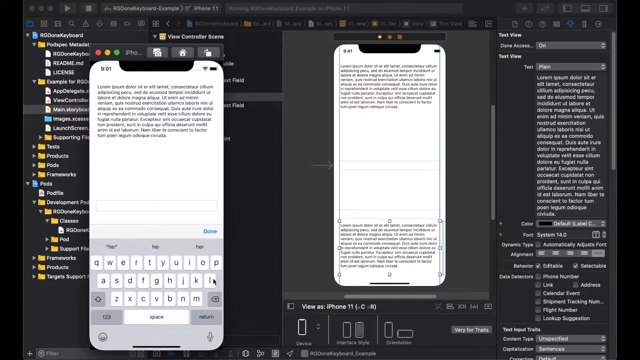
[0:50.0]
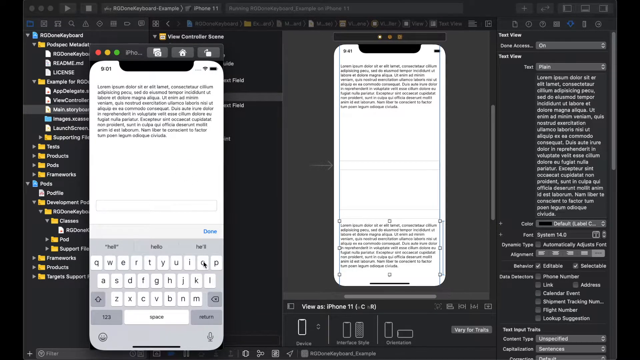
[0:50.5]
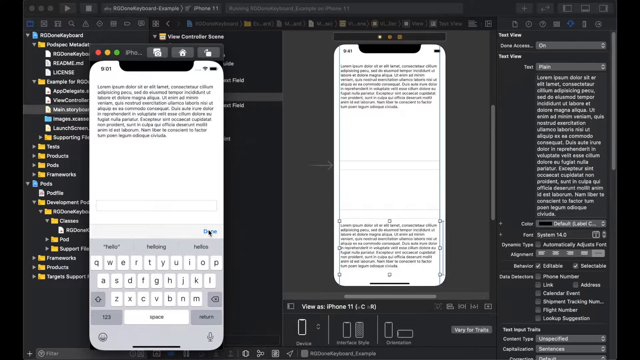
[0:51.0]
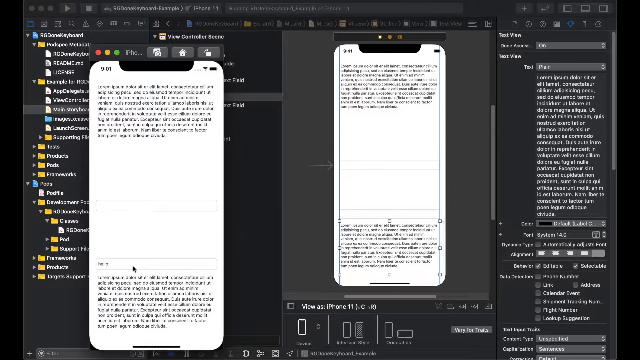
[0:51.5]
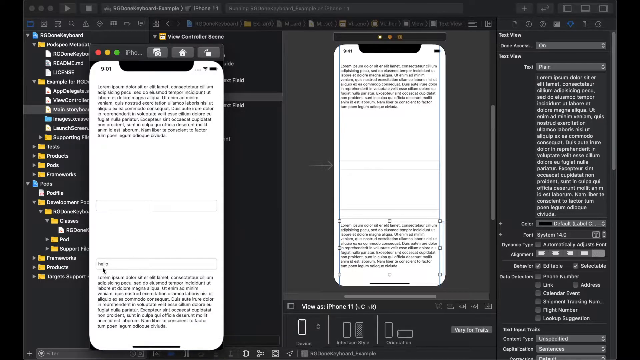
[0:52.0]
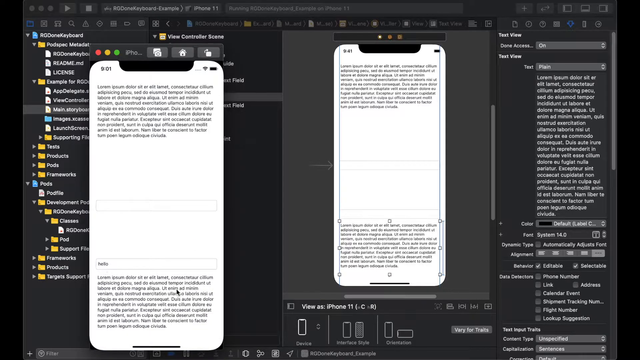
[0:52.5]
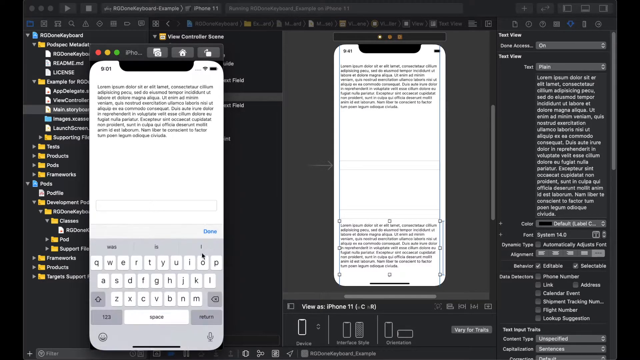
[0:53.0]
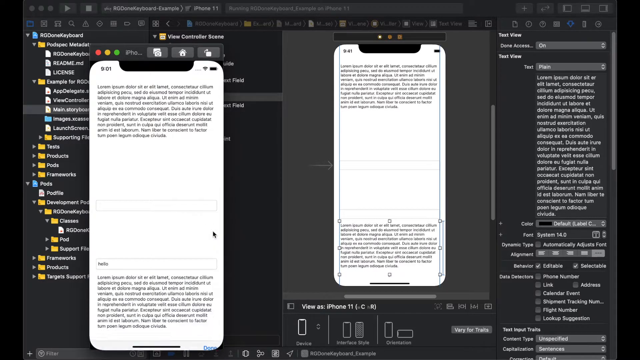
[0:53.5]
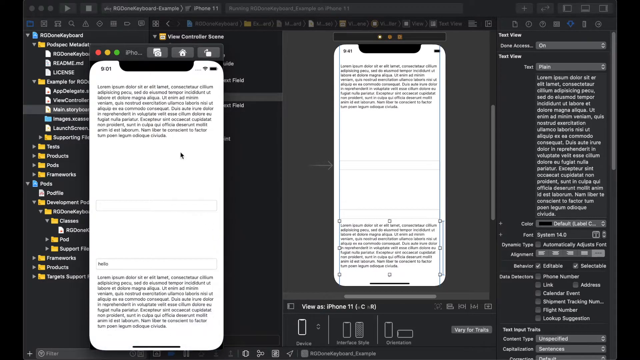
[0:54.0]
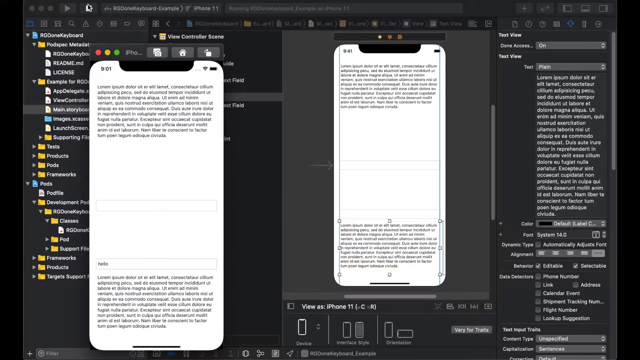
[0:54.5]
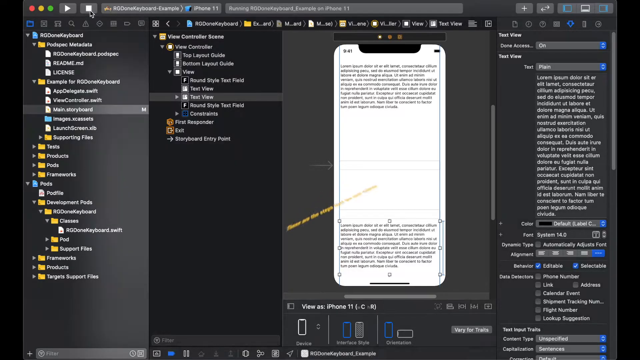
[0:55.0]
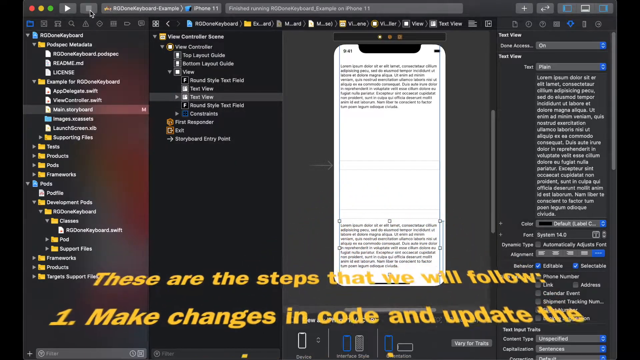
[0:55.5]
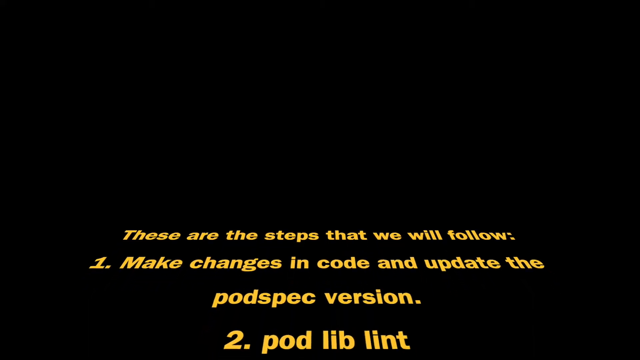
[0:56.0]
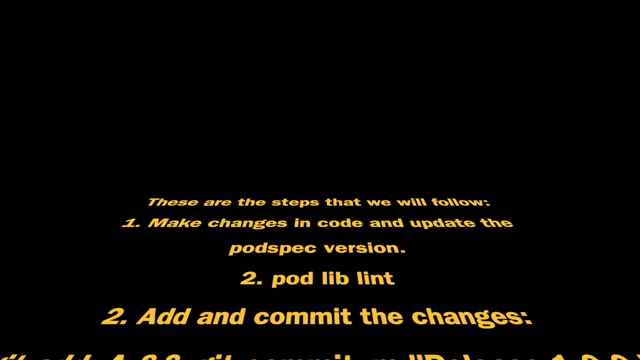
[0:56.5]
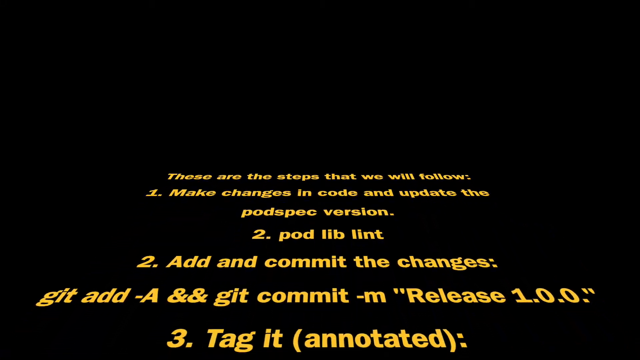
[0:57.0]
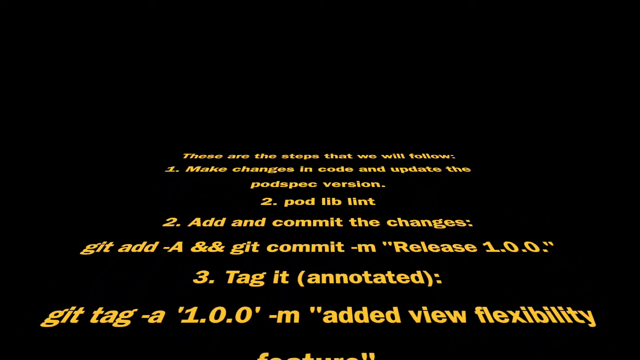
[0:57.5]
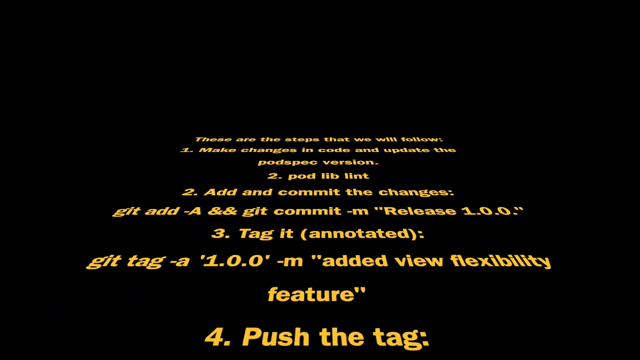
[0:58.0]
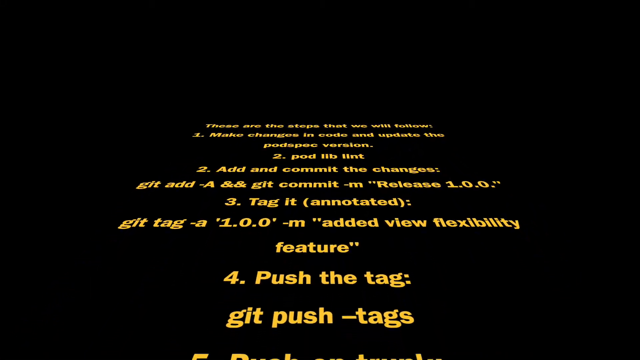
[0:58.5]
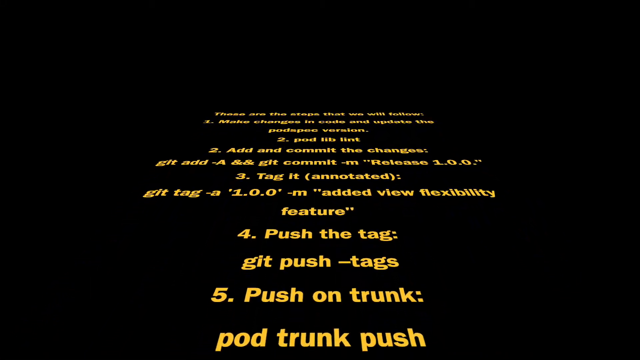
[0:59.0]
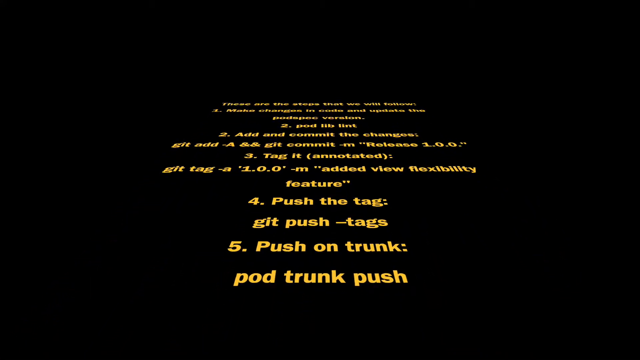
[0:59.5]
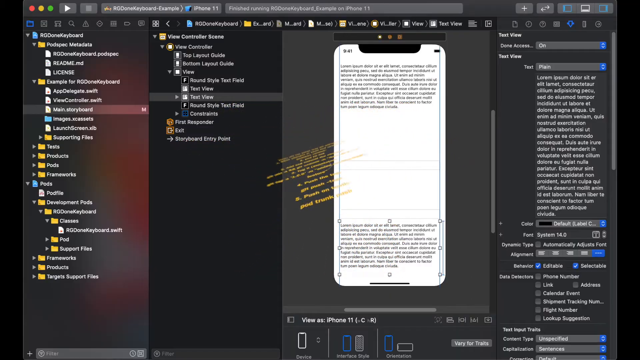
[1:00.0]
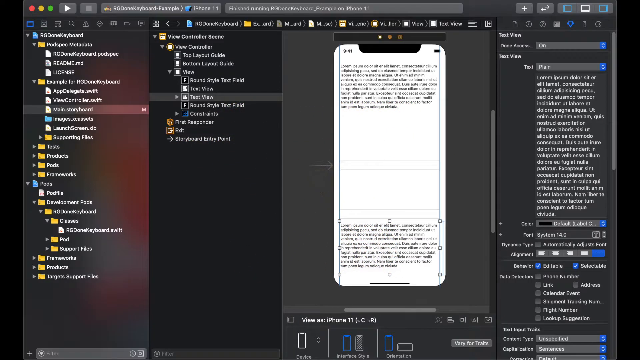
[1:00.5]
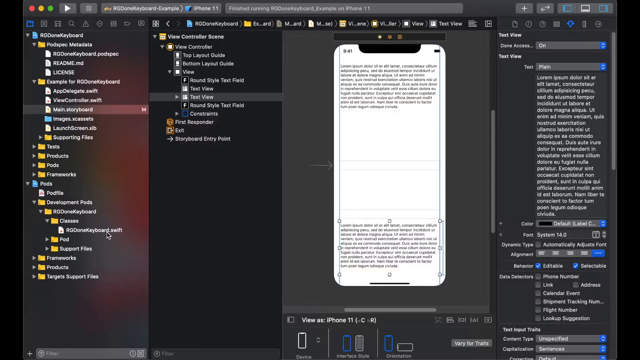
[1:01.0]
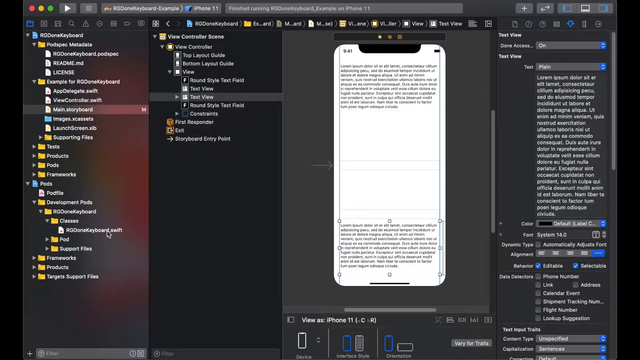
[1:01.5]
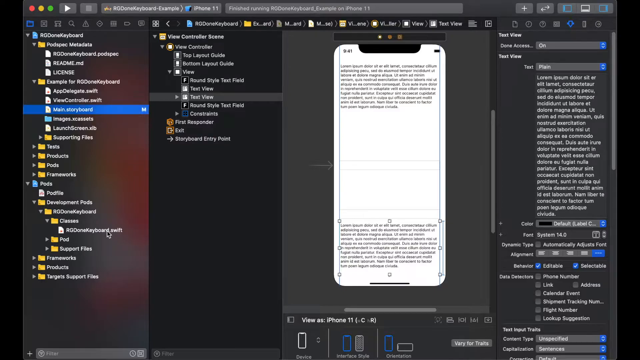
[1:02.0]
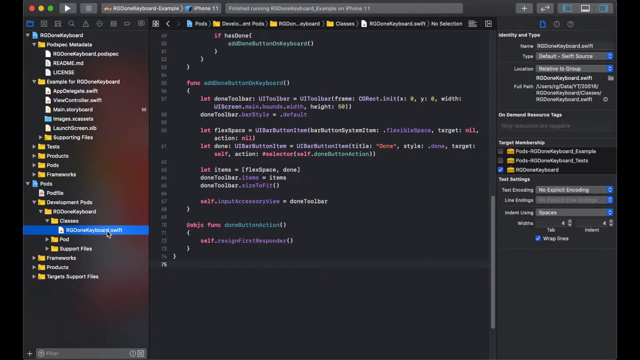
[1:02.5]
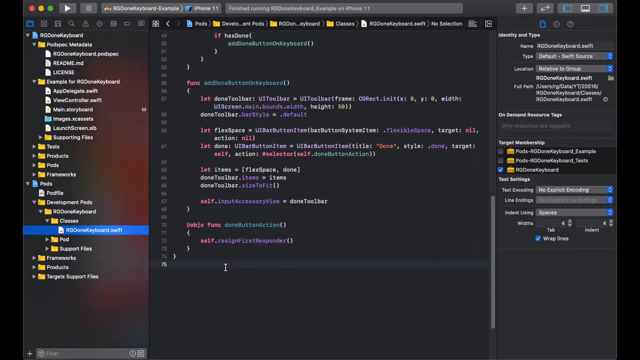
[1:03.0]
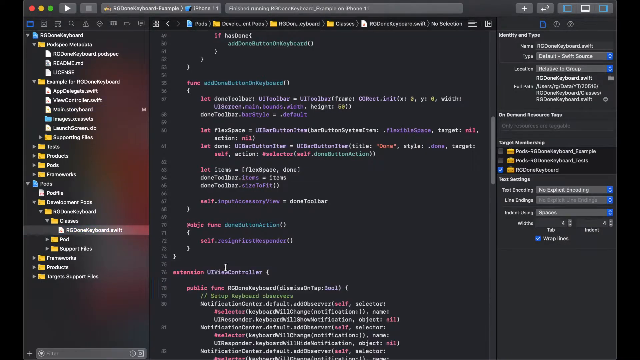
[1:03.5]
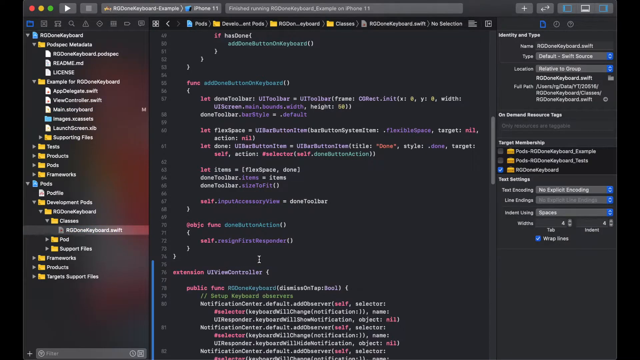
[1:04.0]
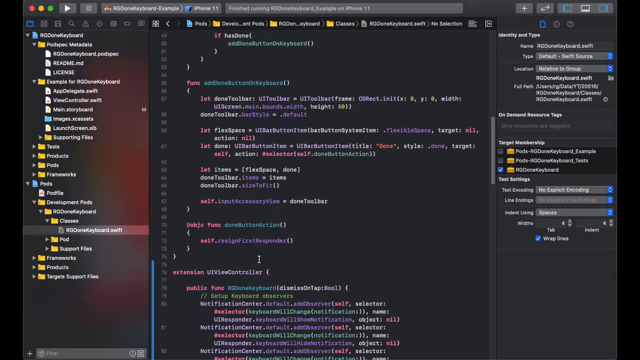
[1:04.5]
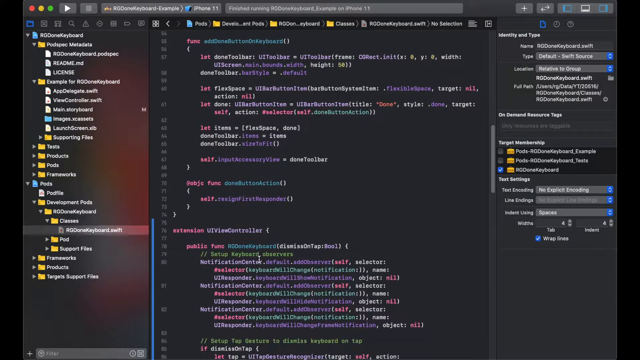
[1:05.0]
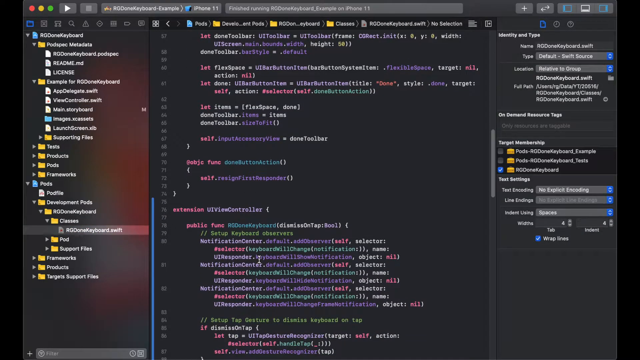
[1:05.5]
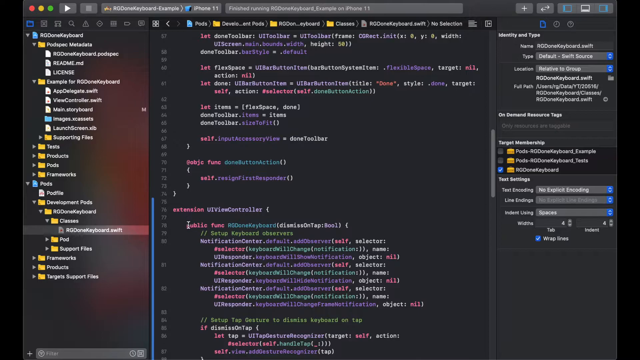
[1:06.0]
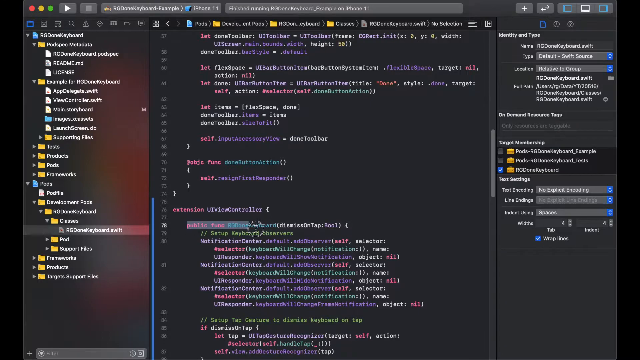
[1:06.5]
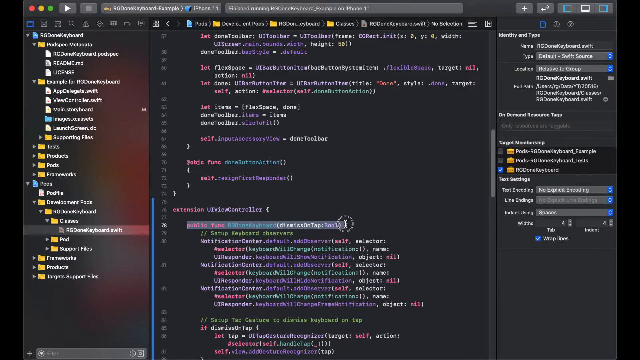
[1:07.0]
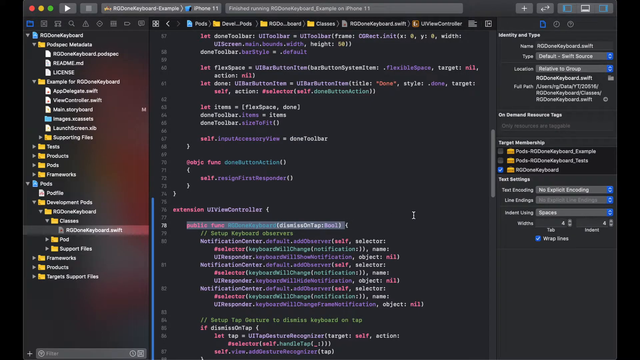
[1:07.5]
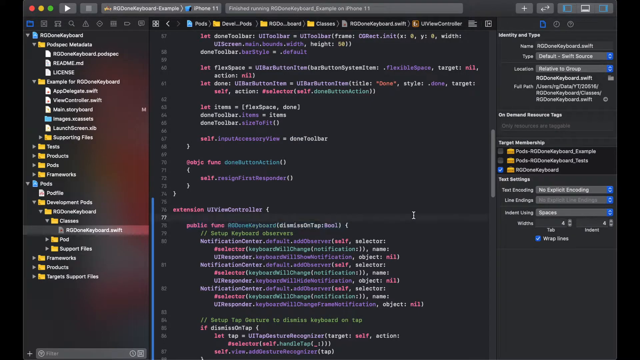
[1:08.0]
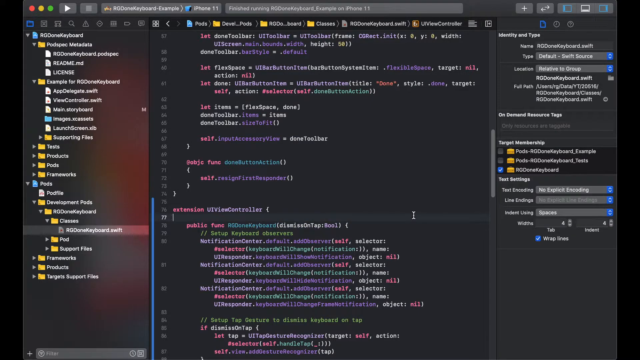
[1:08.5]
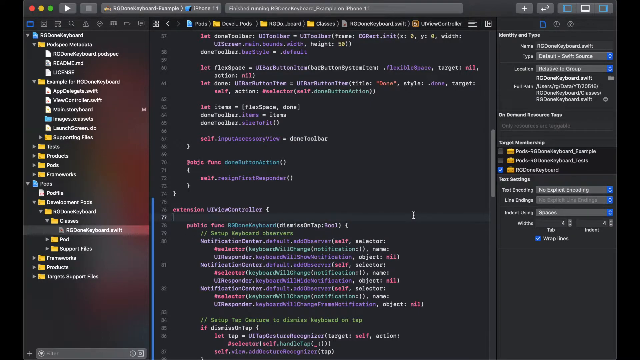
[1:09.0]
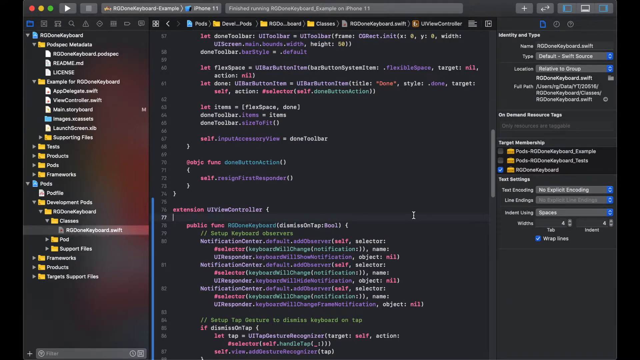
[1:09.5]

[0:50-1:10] The screen shows two phone screens: one in the middle, which is the screen that was being edited, and one on the left-hand side of the screen. The mouse hovers over the one on the left and interacts with it, clicking on the screen, and the phone's QWERTY keyboard pops up. The mouse then clicks the stop button in the top left-hand corner of the page. The whole screen goes black and yellow text appears, moving further away from the viewer to reveal more text. It reads "These are the steps that we will follow", followed by numbered steps including "Make changes in code and update the pod spec version", "Pod lib lint", "Add and commit the changes" with git add and git commit commands, "Tag it annotated" with a git tag command mentioning "added view flexibility feature", "Push the tag" with a git push command, and "Push on trunks" with "Pod trunk push". The text moves to the back of the screen and disappears, and the computer screen page with the phone returns. The phone then disappears and a line of code appears in the center of the screen. The cursor highlights one of the lines of code and then clicks into the text field.